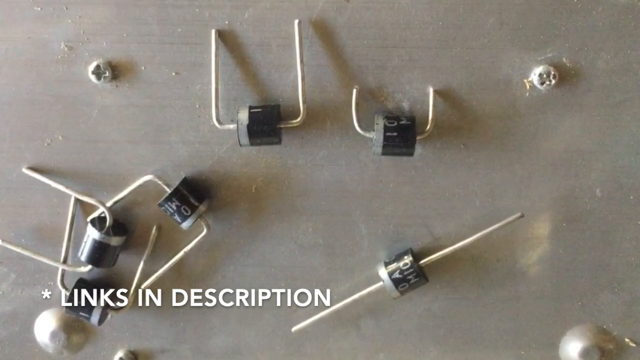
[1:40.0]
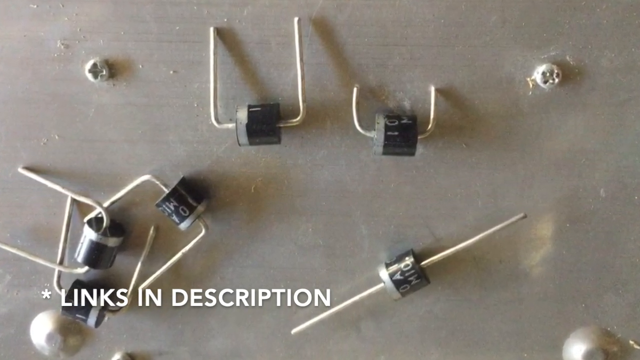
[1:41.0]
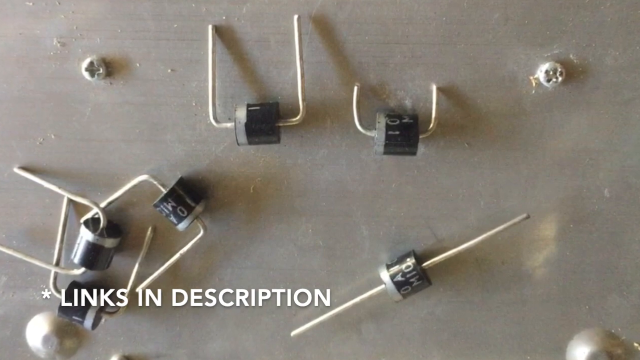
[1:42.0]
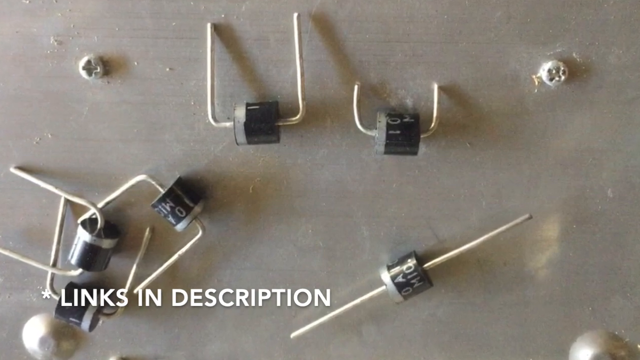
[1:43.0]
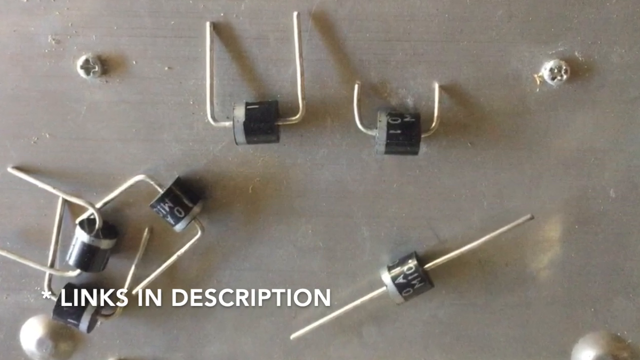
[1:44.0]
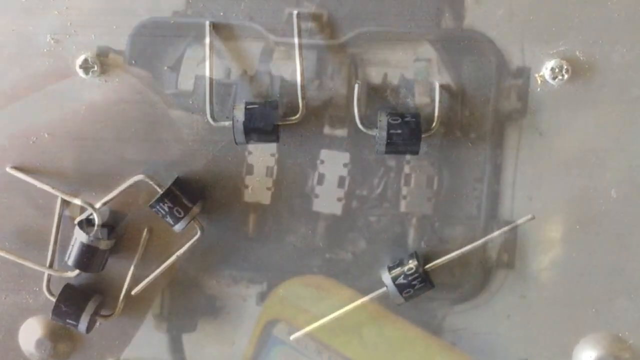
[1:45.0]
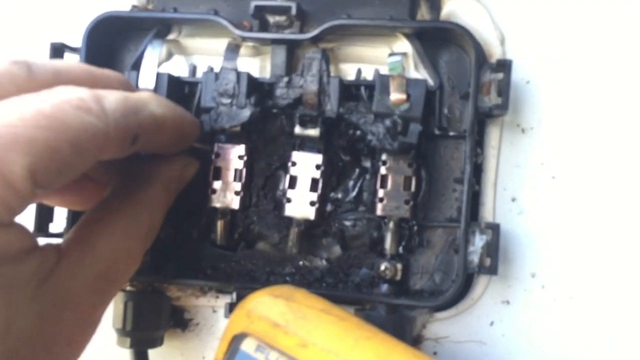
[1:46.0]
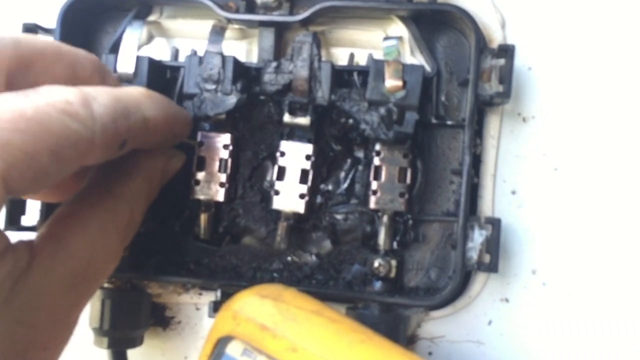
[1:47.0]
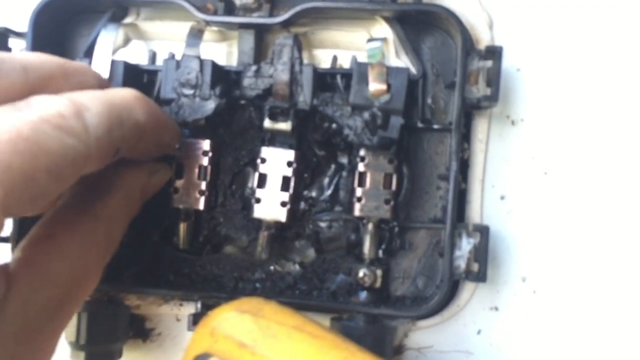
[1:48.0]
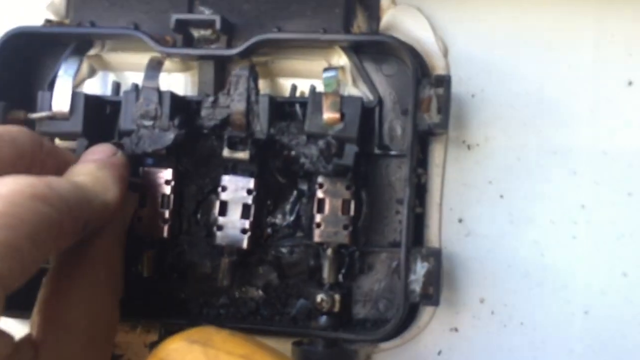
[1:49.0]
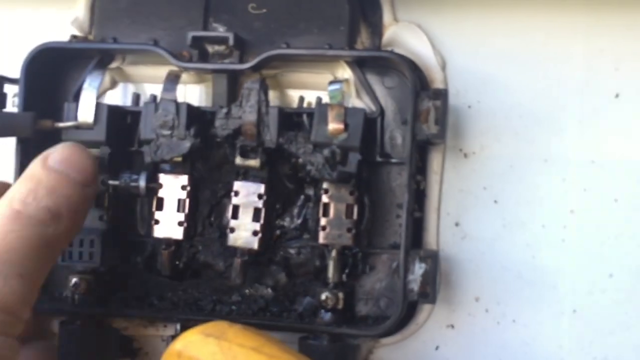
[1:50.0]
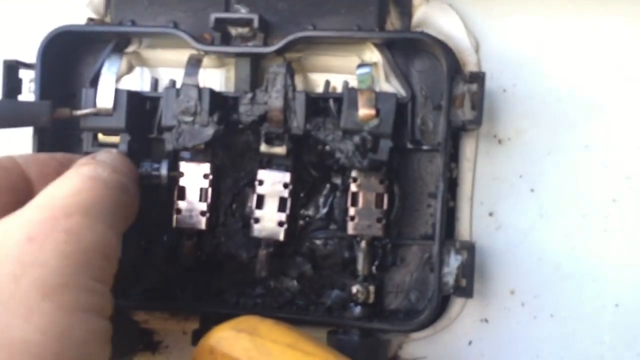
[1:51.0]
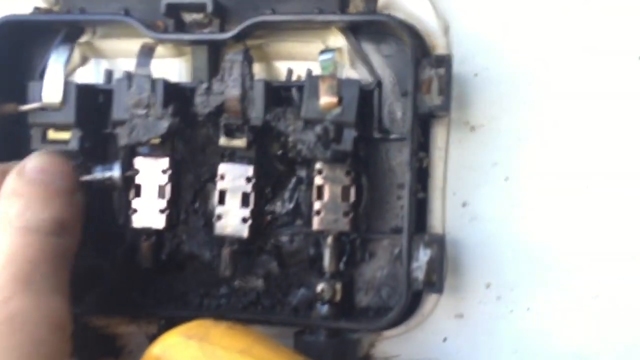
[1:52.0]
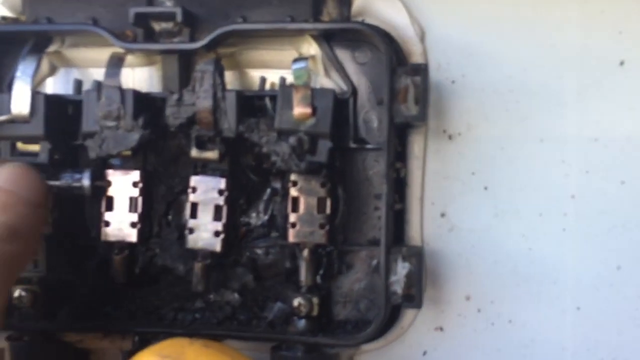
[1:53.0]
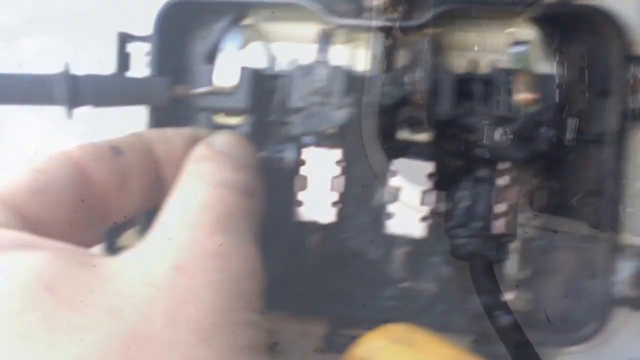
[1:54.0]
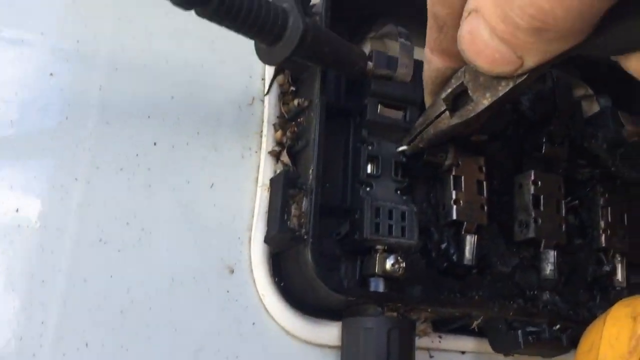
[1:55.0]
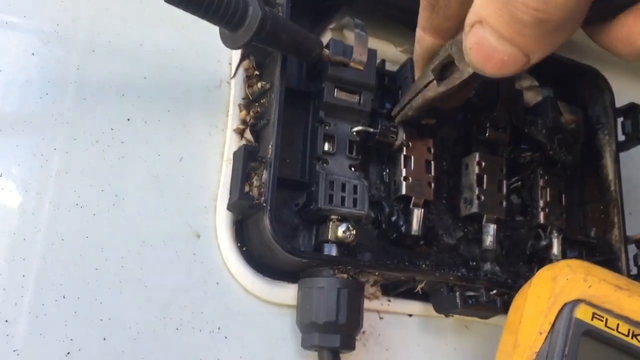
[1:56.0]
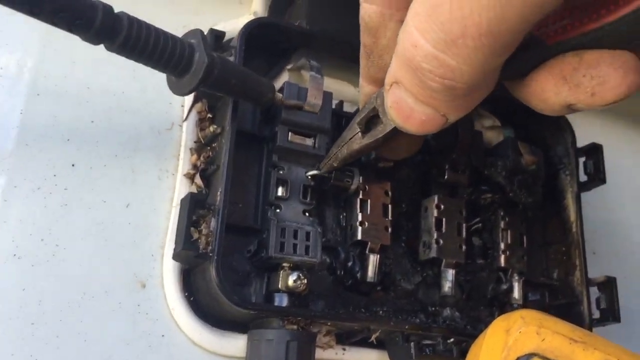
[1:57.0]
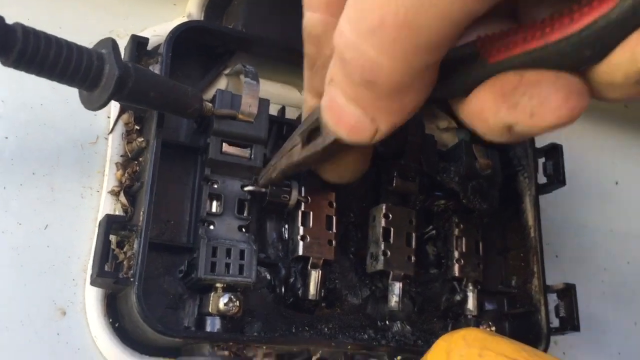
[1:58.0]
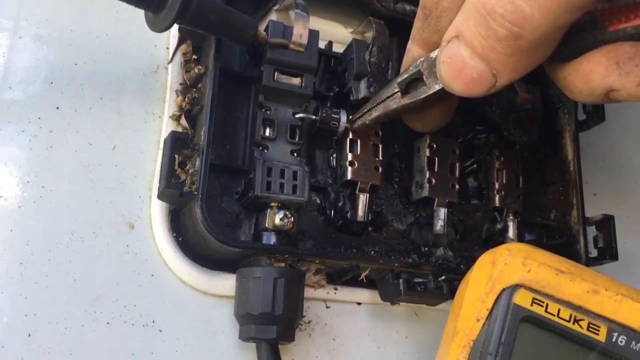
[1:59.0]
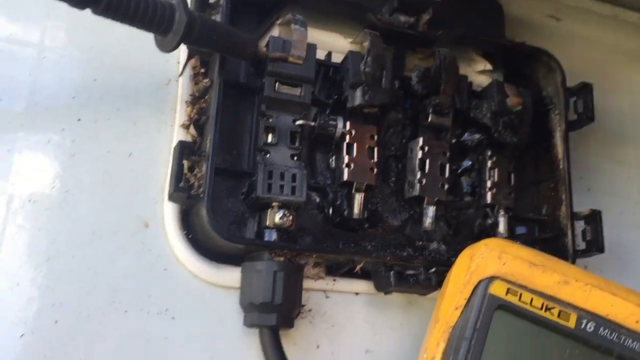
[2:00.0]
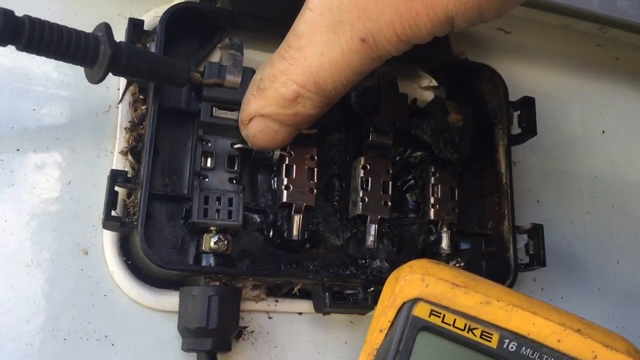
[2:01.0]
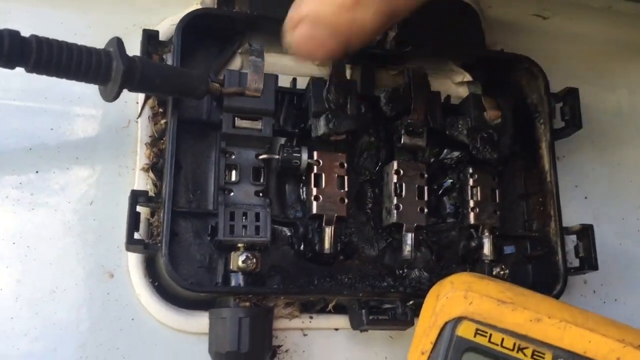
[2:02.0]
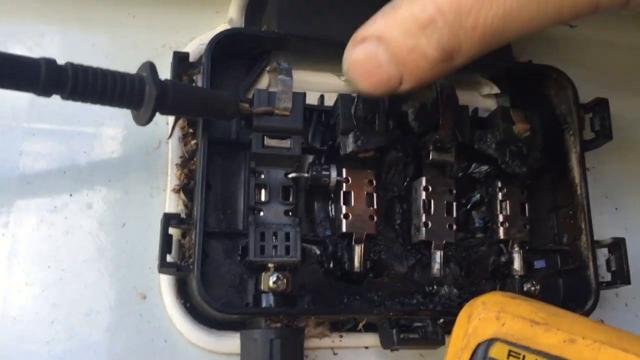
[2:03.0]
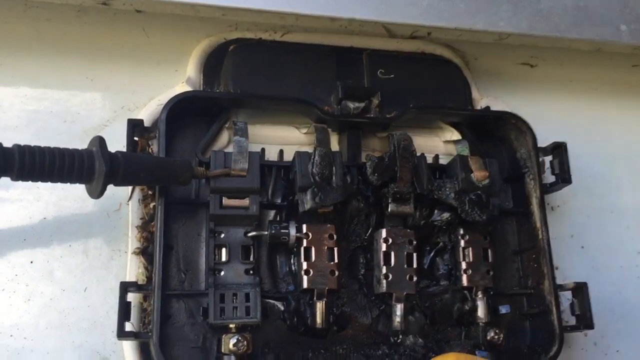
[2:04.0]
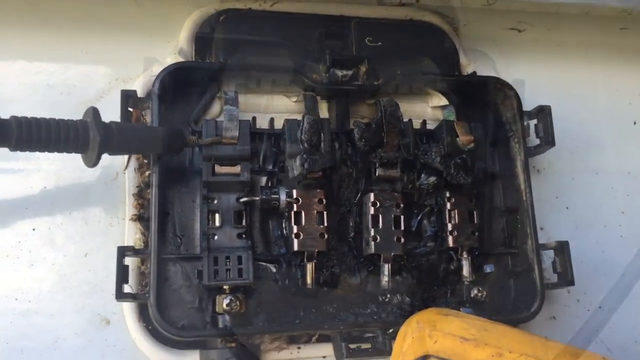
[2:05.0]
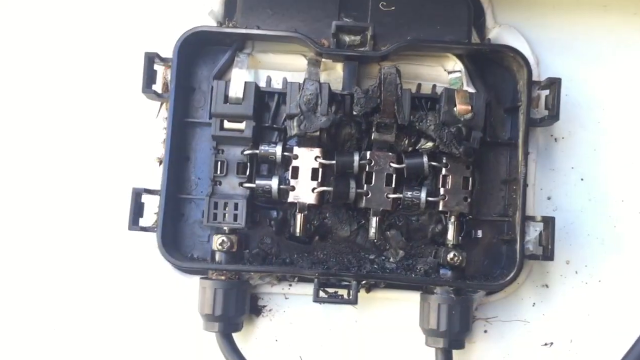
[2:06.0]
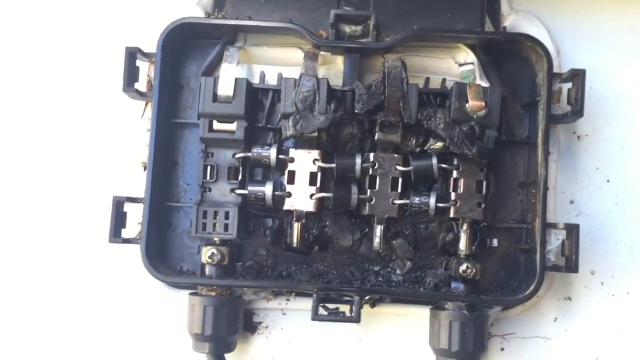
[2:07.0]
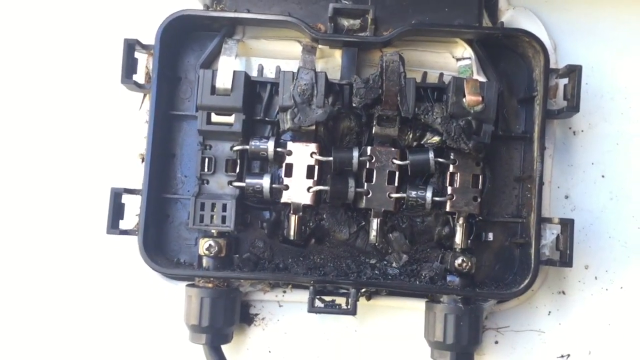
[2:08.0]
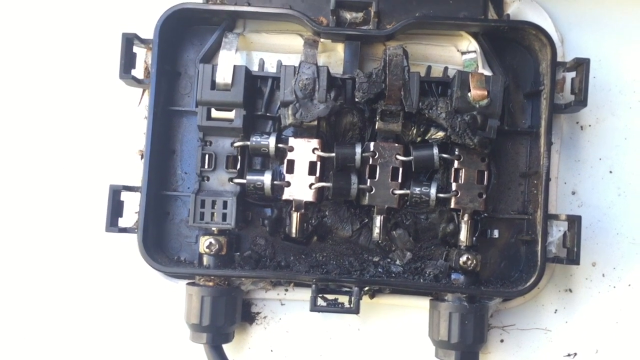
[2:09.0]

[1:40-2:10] The scene shows what looks like a white wall, floor or work table, on top of which are a variety of what look like small circuits intended for the wall unit. They are small black squares, three-dimensional like little cubes; four or five of them are placed there, each with a similar metal wire going through it in the shape of a horseshoe. One, however, is circular at the bottom, diagonally in the lower right corner. White text on the bottom left reads "links in description". The camera pans a bit closer to the small parts. Then a man's left hand applies these small parts into the wall piece with his thumb and pointer finger, as they are quite small. His hand, especially the thumb, has quite a bit of dirt under the fingernails. In the next shot he works from the right side of the image, holding a small pair of pliers and inserting one of the pieces into the wall unit, pushing it and then using his thumb to make it tighter and more secure.